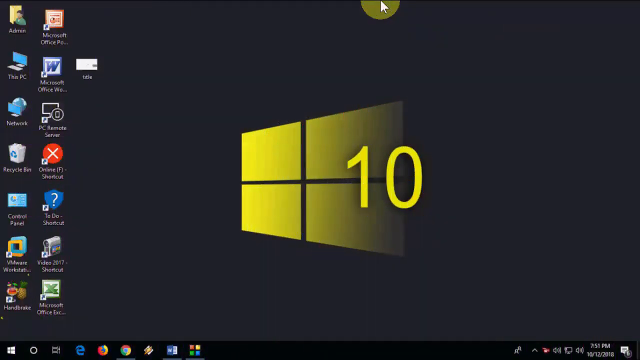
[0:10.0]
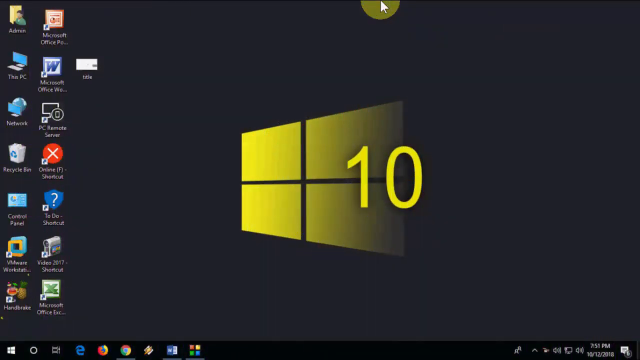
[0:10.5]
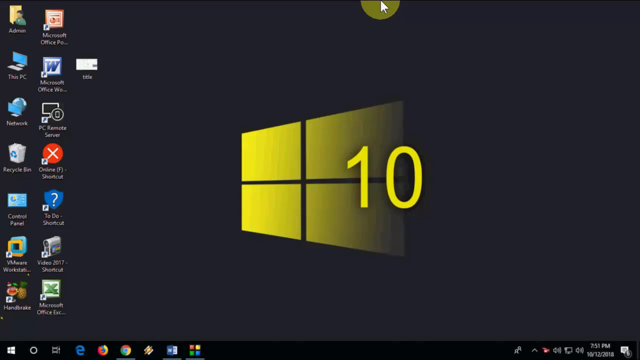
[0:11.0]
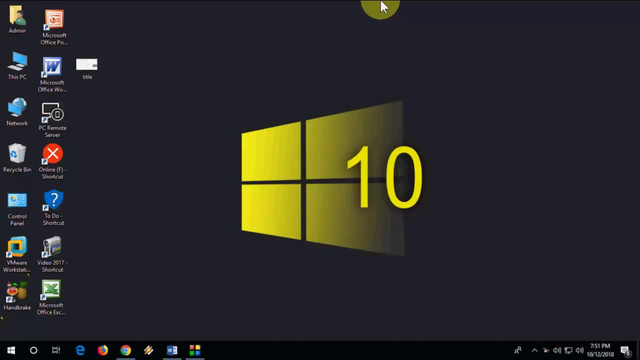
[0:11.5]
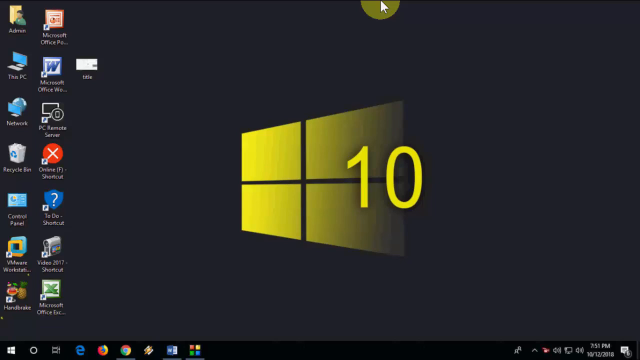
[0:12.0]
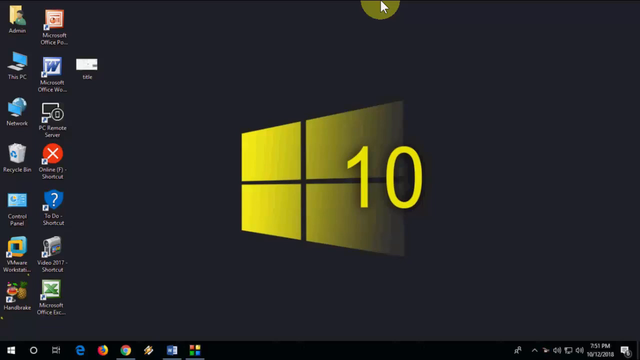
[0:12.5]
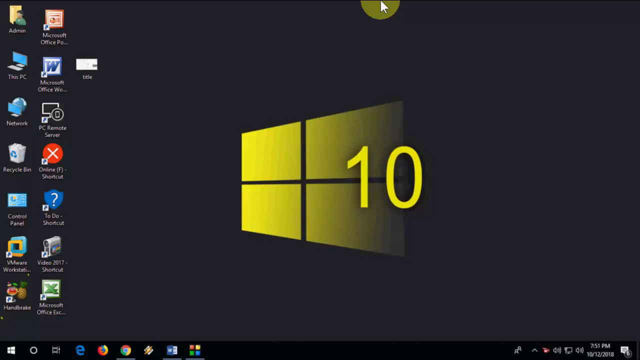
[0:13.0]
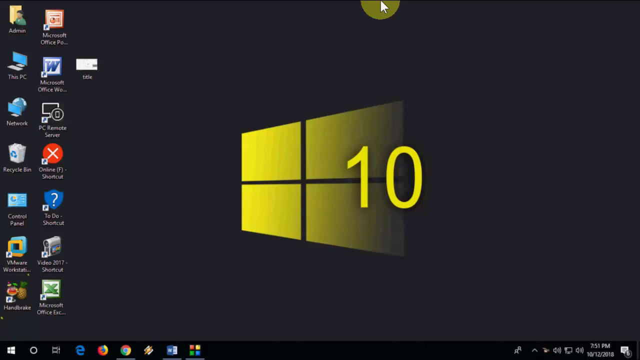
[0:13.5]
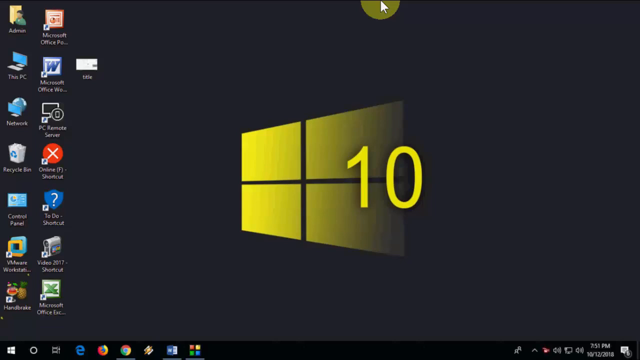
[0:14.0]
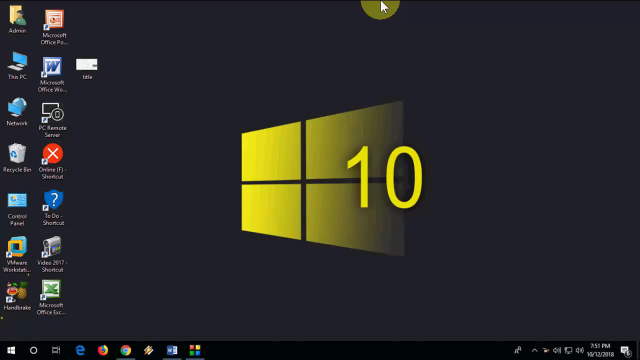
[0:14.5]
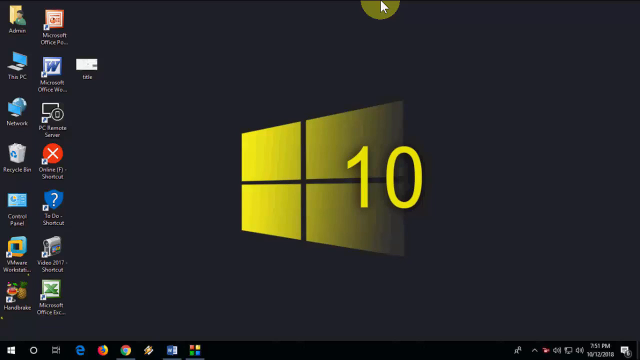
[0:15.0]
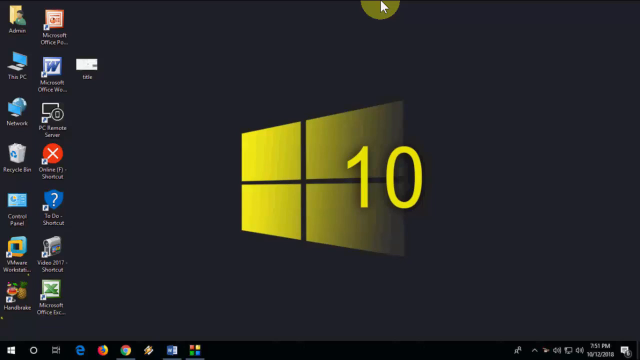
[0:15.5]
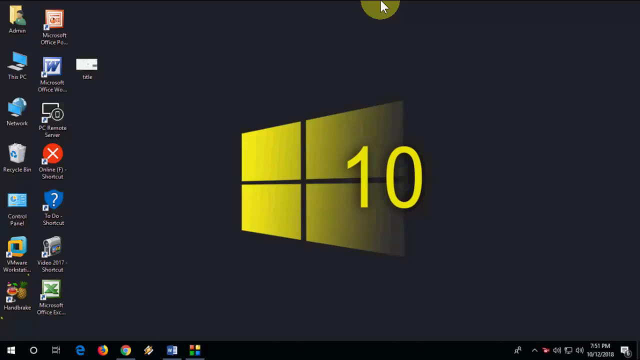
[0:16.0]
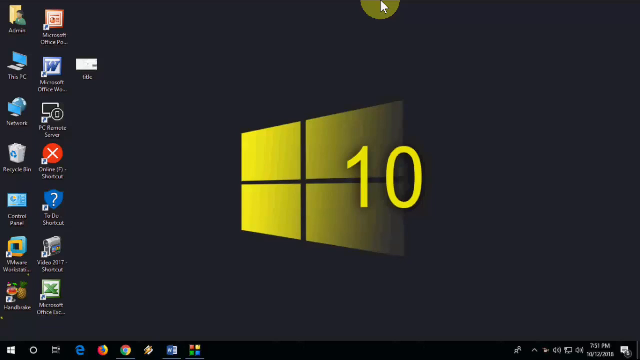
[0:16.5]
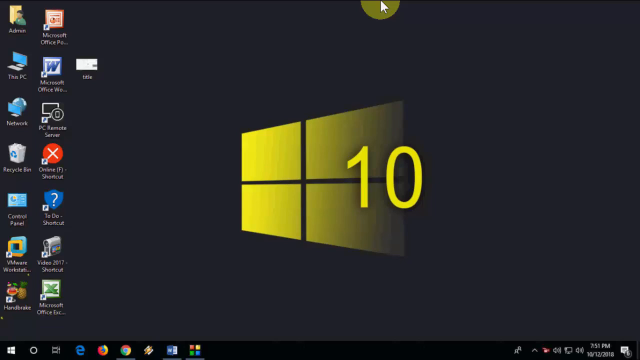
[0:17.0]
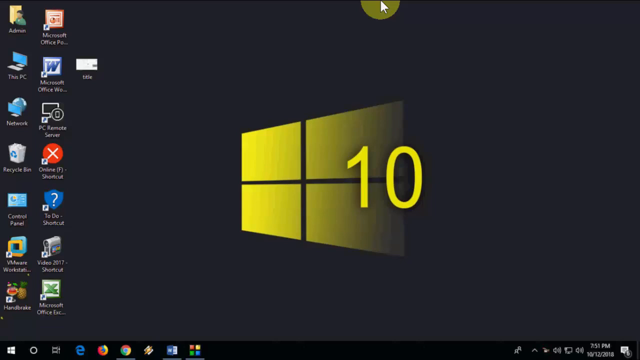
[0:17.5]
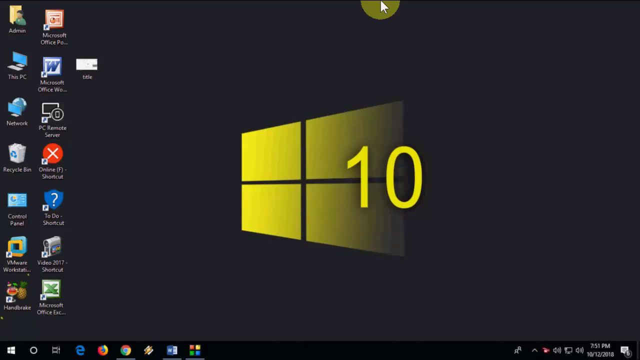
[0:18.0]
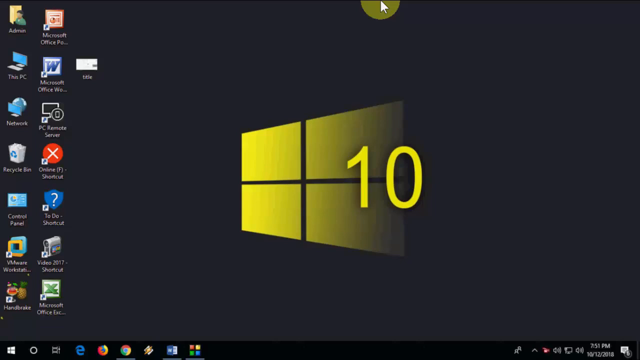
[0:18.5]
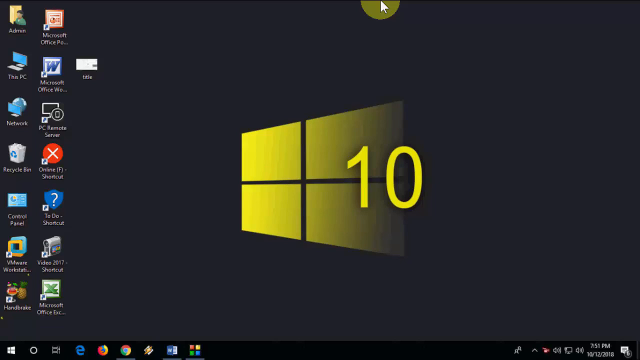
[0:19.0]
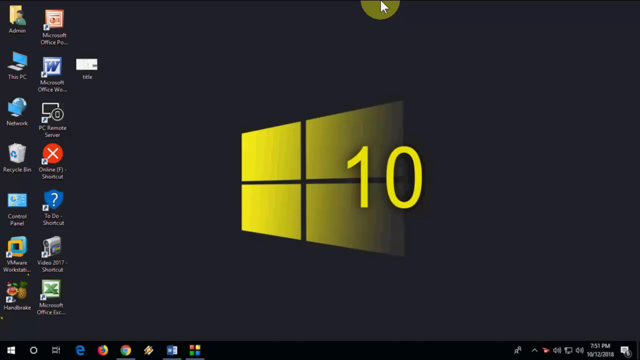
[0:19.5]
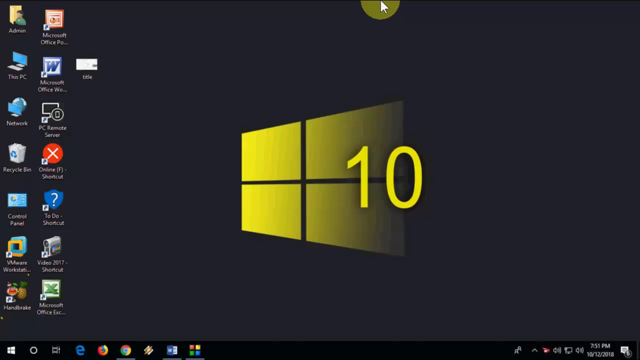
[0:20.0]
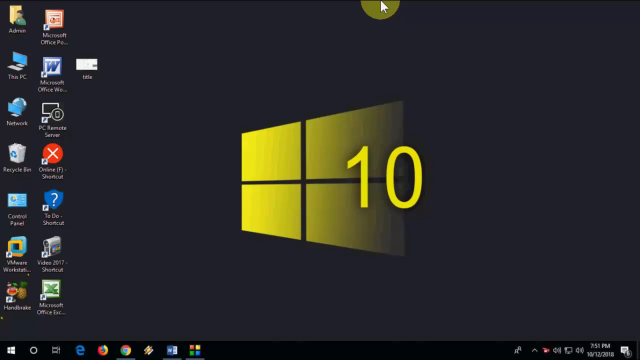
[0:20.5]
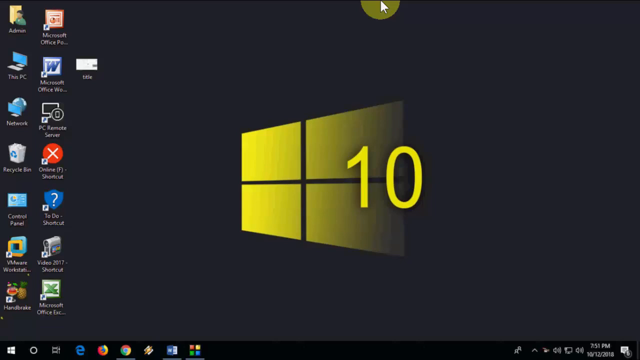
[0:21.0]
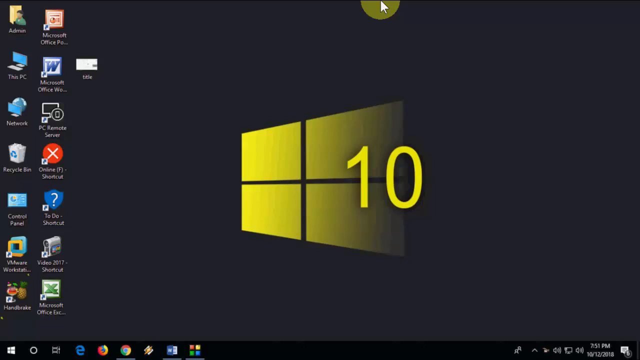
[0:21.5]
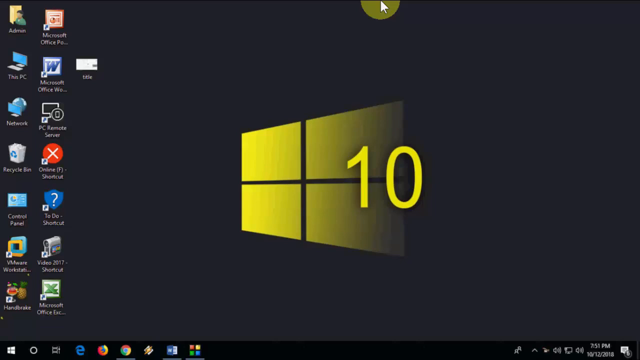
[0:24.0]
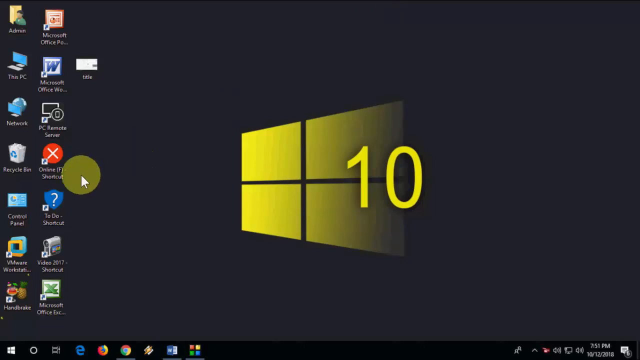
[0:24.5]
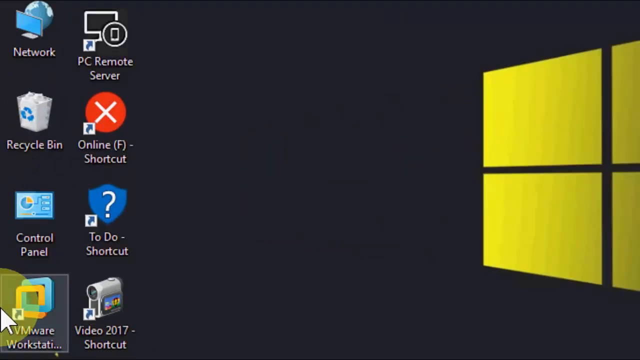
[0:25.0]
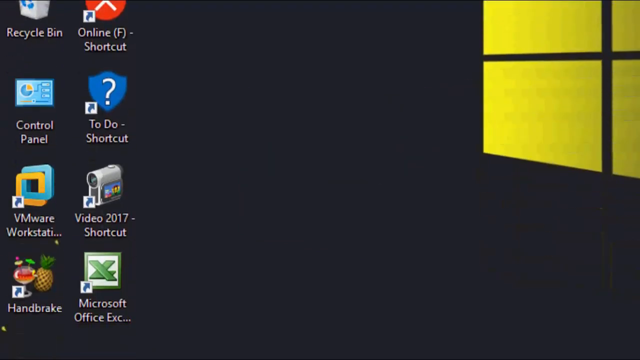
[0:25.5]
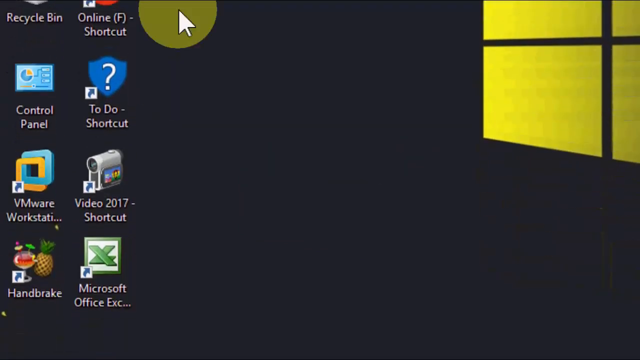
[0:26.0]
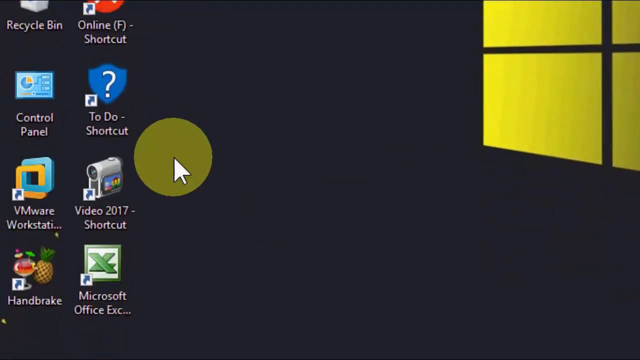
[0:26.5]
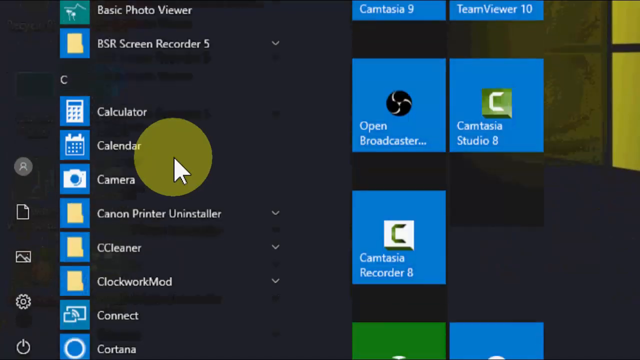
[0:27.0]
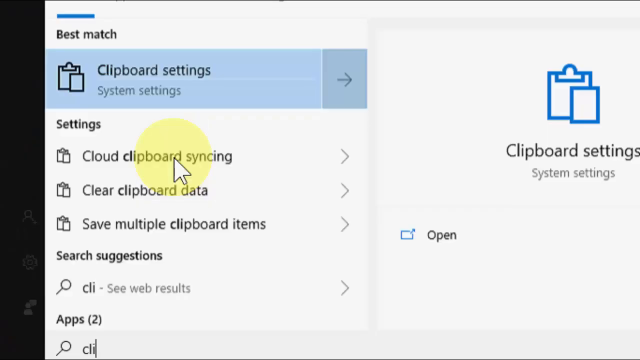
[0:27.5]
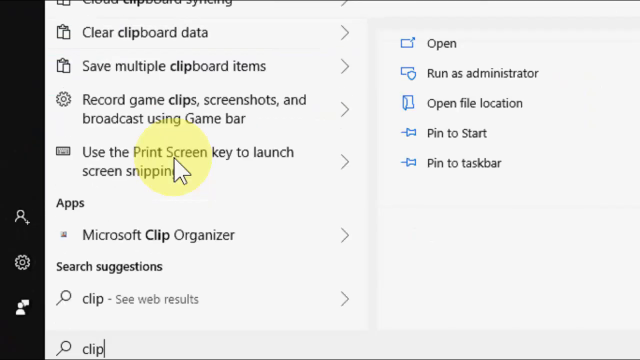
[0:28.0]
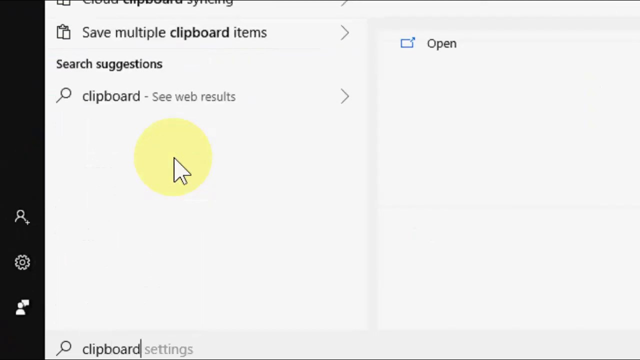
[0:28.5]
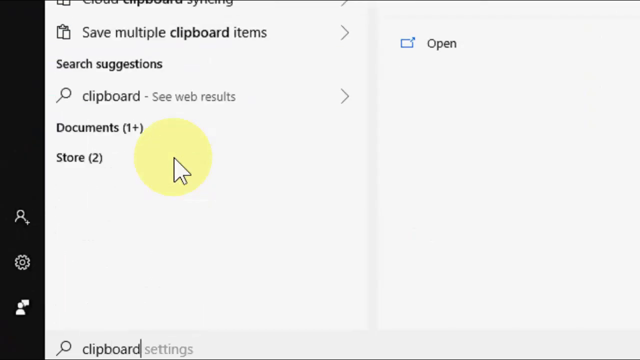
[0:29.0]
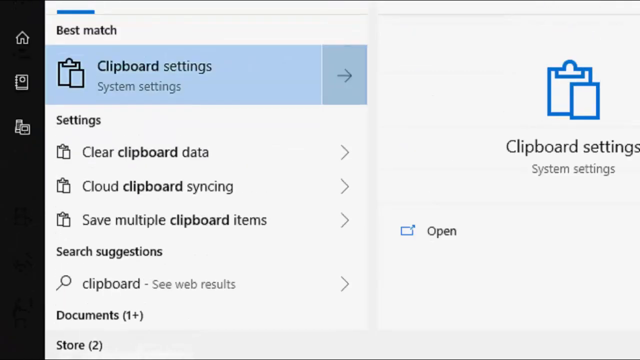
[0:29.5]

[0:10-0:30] The Windows 10 desktop has a dark, somewhat gray background with a yellow Windows logo, some applications and a cursor visible. Applications on the desktop include the Recycling Bin, VMware Workshop, Microsoft Office Excel, Microsoft Office Word and Microsoft PowerPoint. The screen stays on the desktop for a few seconds, then zooms into the left side of the desktop and opens the Windows search bar. In the search bar, Clipboard Settings is searched for and opened. There are no physical subjects visible; the view moves between the desktop and the Windows search options.